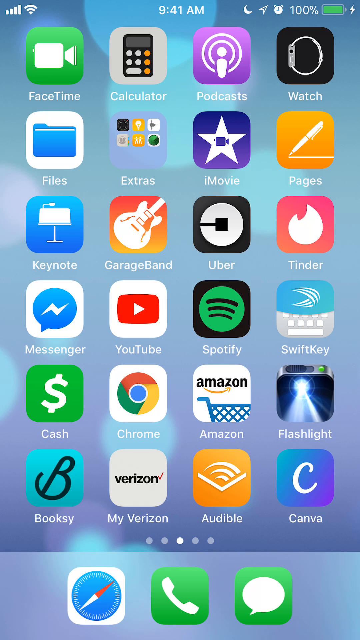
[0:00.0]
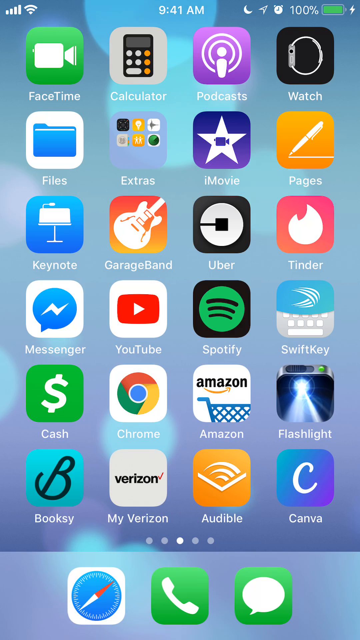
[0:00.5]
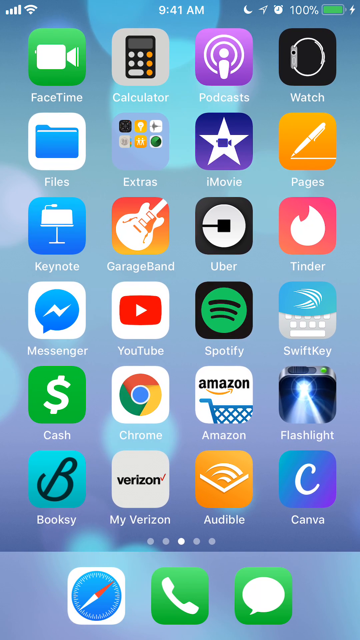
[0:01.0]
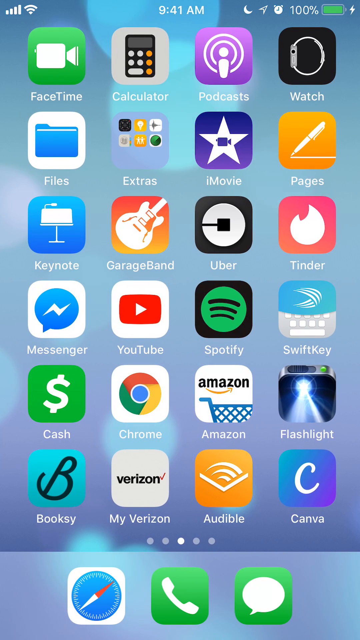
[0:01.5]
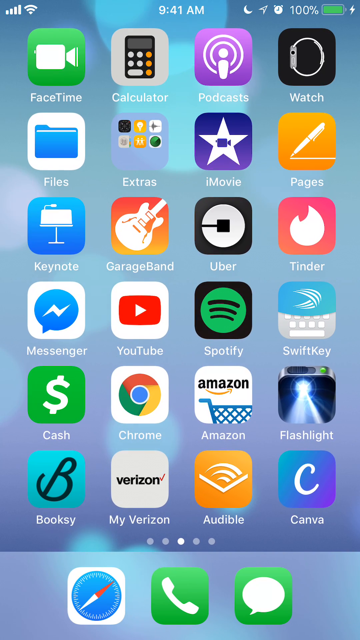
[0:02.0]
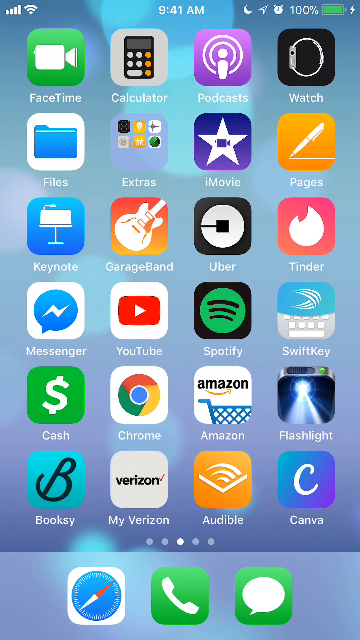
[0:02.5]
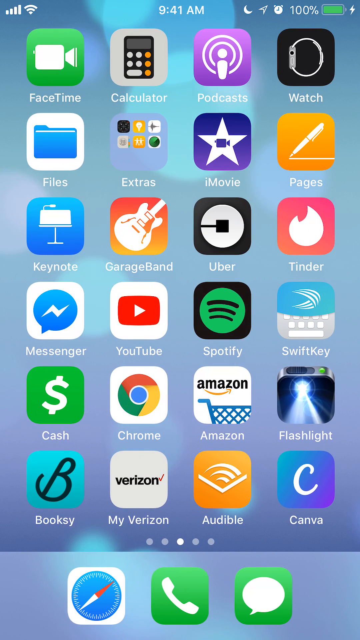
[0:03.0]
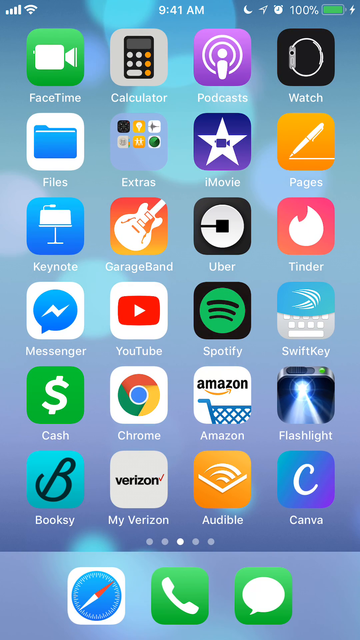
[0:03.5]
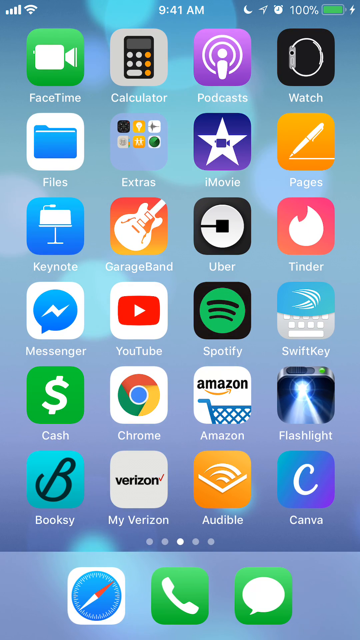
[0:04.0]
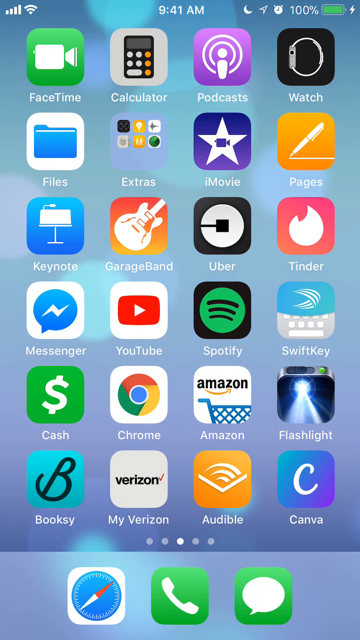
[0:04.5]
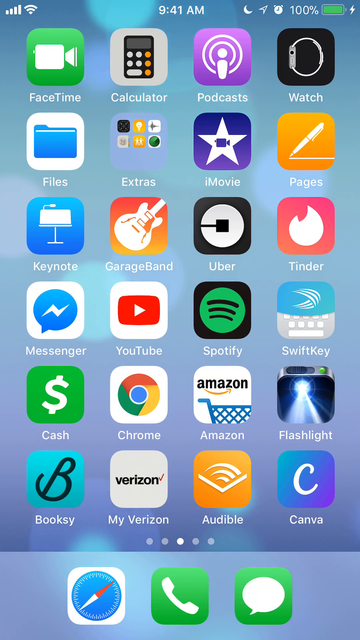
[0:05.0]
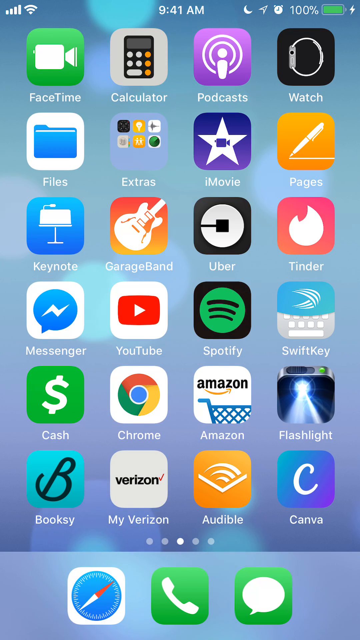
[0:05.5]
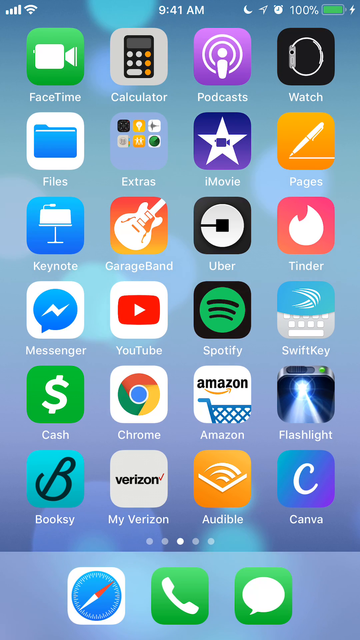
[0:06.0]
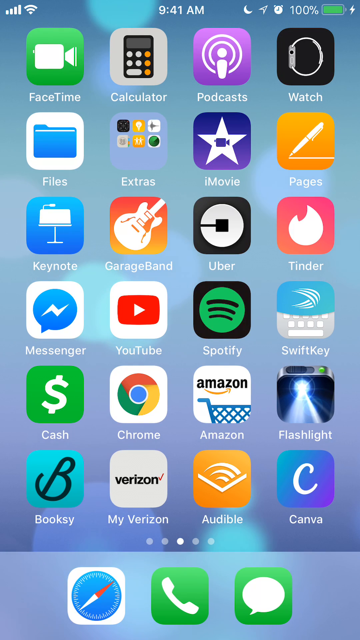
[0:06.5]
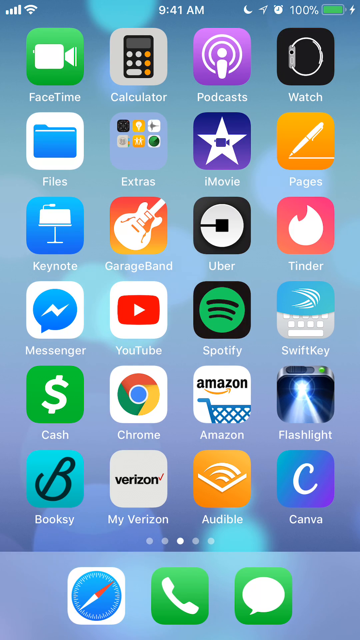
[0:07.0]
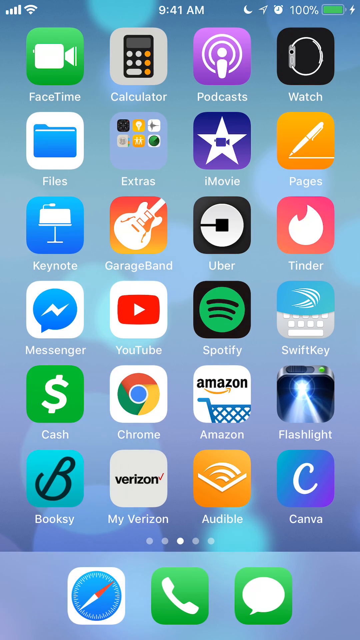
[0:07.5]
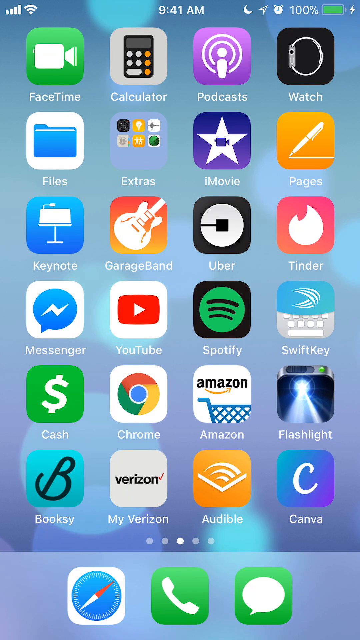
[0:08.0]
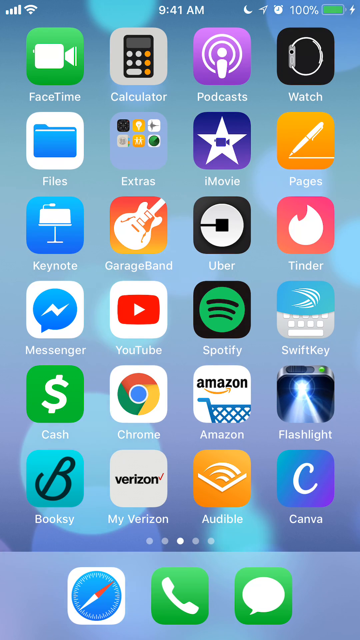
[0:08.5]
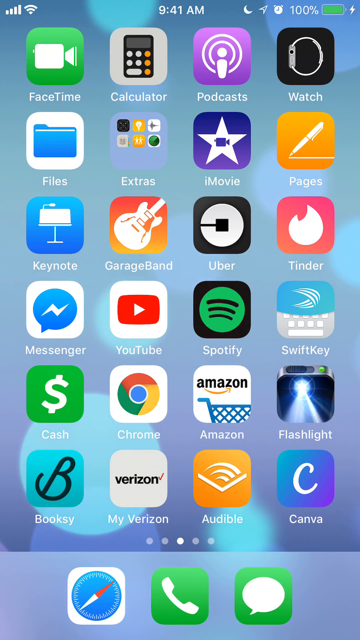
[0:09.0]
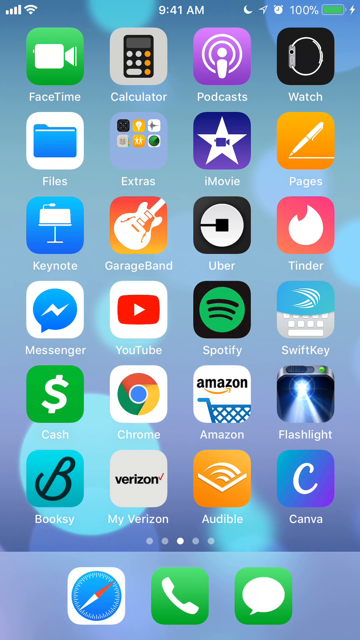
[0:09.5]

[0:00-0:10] What appears to be an iPhone screen shows many app icons, including FaceTime, Podcasts, Uber, Tinder, YouTube, Spotify, SwiftKey Keyboard, Chrome, Amazon, My Verizon, Booksy, Audible and Canva. The background is blue. Nothing really happens apart from the background seeming to move: blue and maybe purple-ish circular patterns move around like floating bubbles, apparently an animated background. The status bar shows mobile data reception, Wi-Fi reception, the time of 9:41 AM, and a fully charged battery.